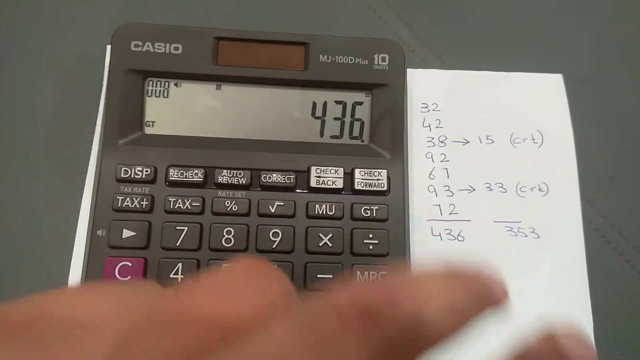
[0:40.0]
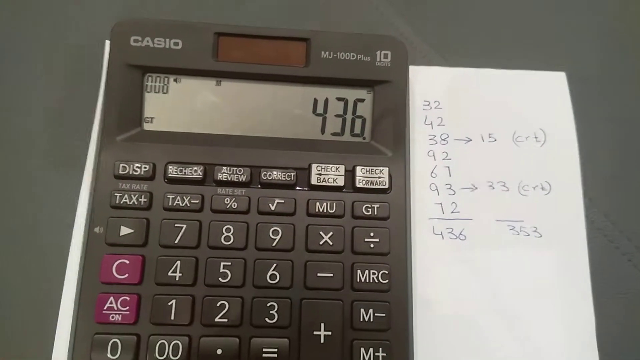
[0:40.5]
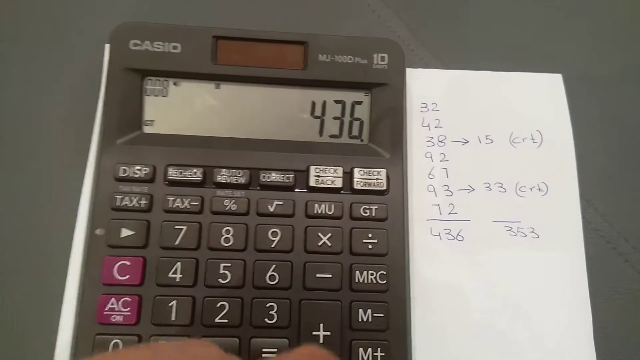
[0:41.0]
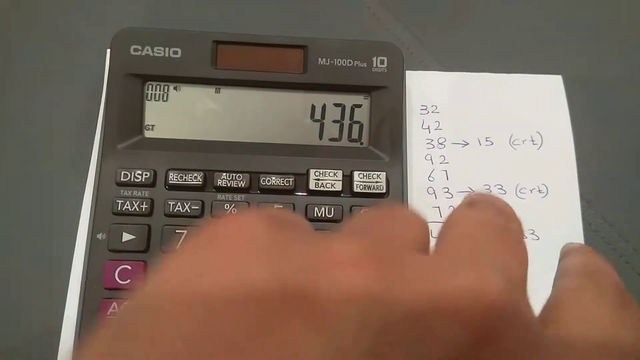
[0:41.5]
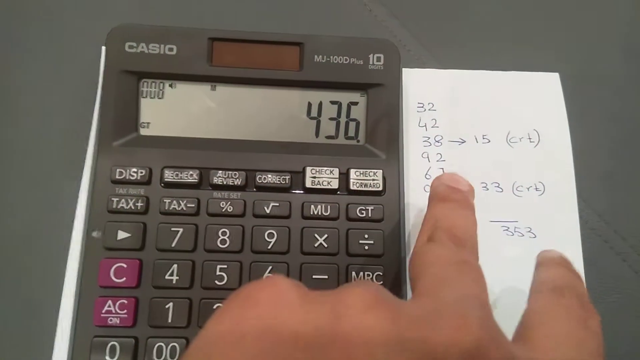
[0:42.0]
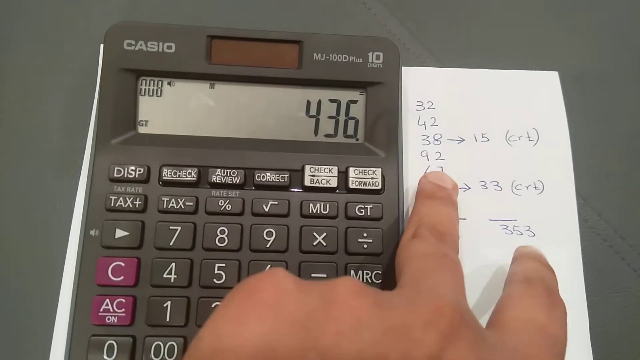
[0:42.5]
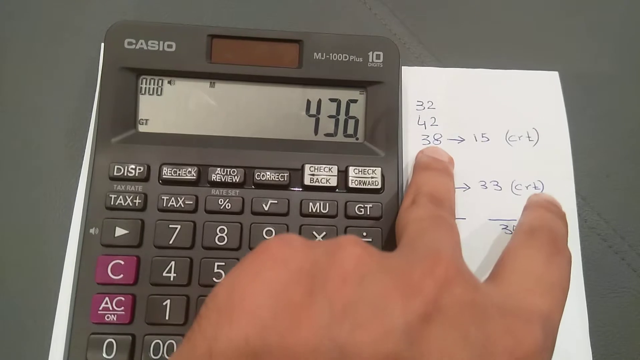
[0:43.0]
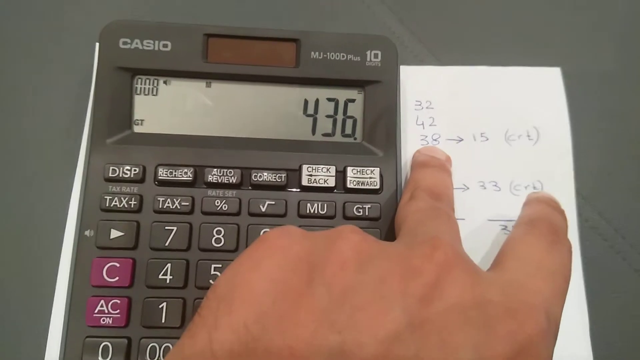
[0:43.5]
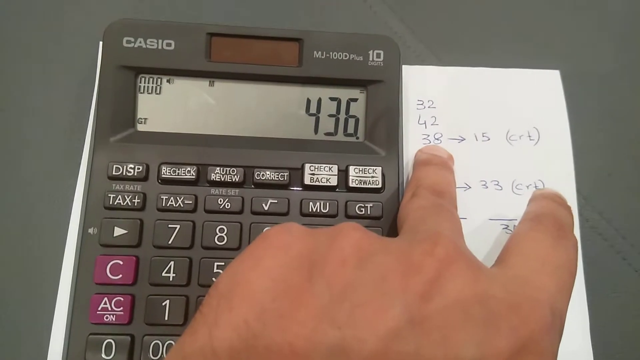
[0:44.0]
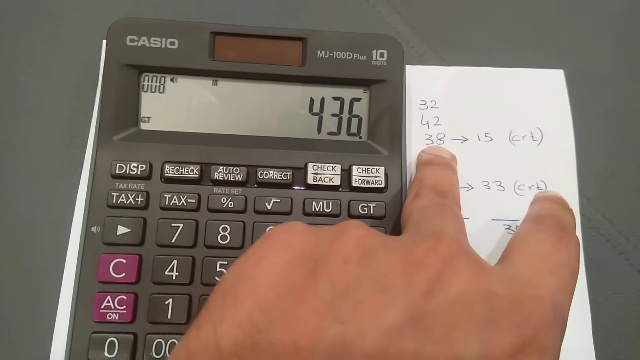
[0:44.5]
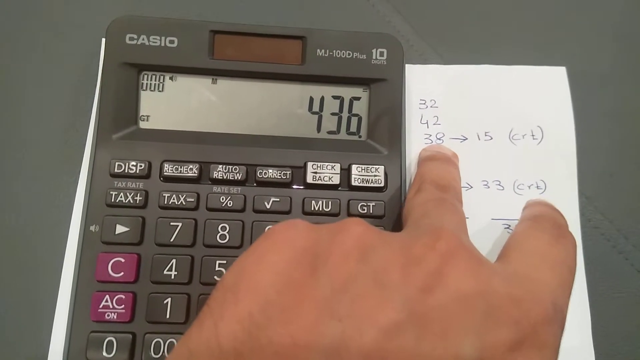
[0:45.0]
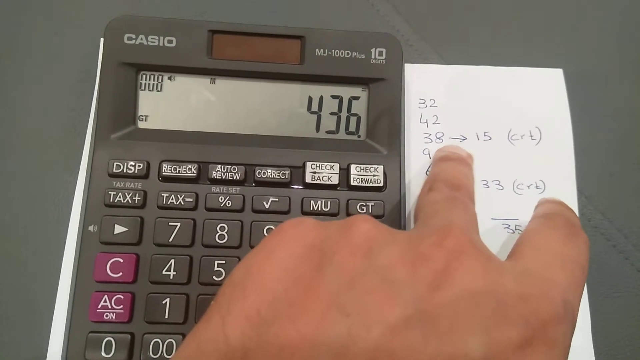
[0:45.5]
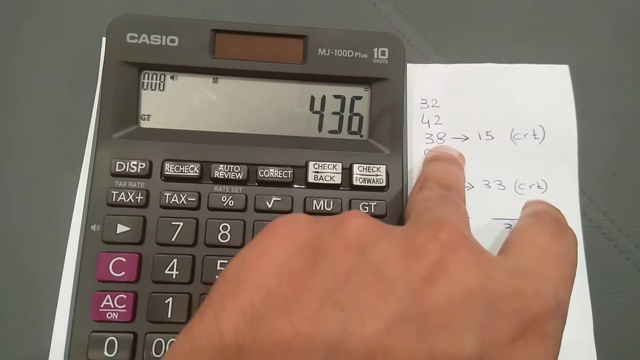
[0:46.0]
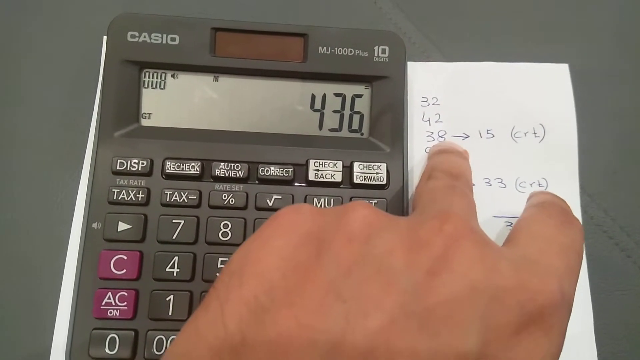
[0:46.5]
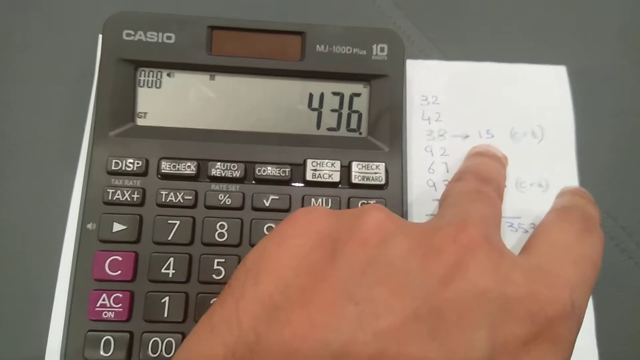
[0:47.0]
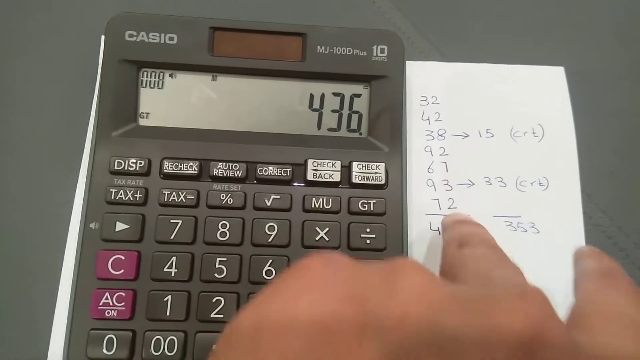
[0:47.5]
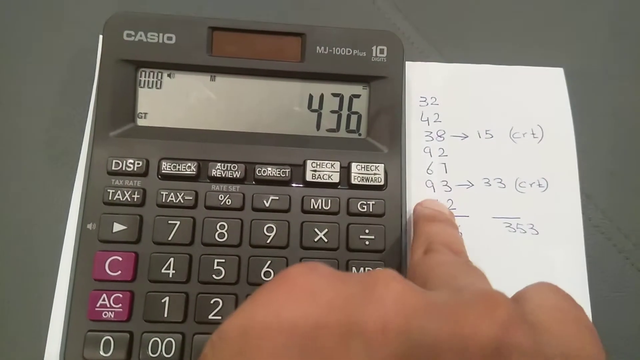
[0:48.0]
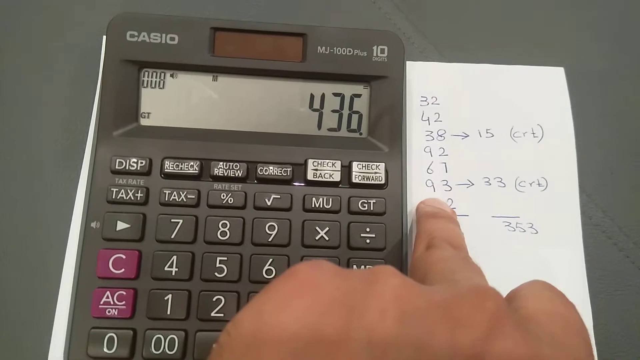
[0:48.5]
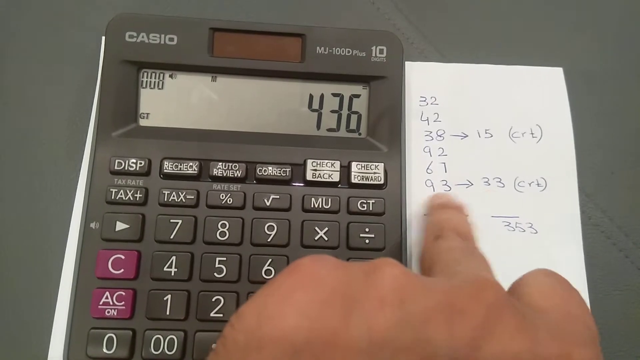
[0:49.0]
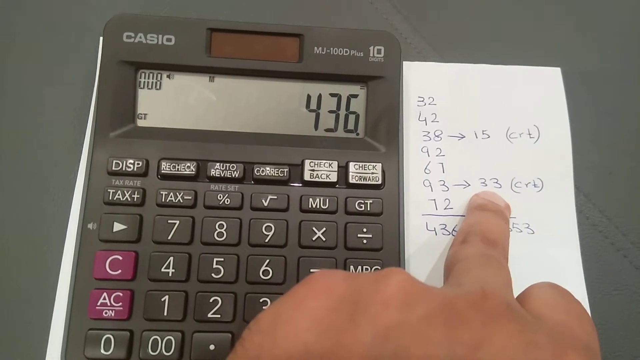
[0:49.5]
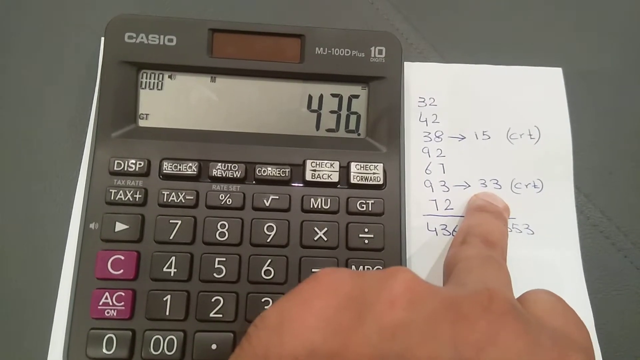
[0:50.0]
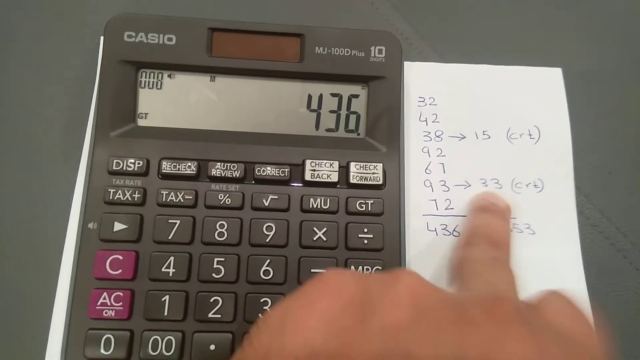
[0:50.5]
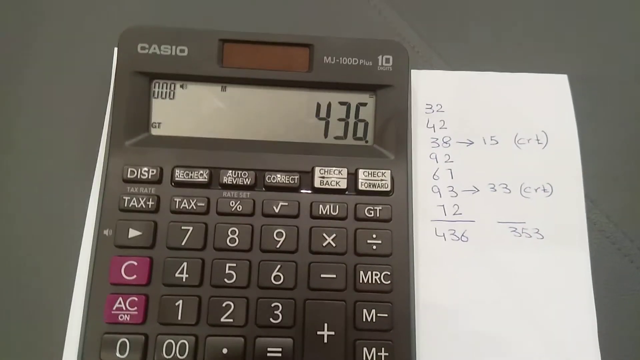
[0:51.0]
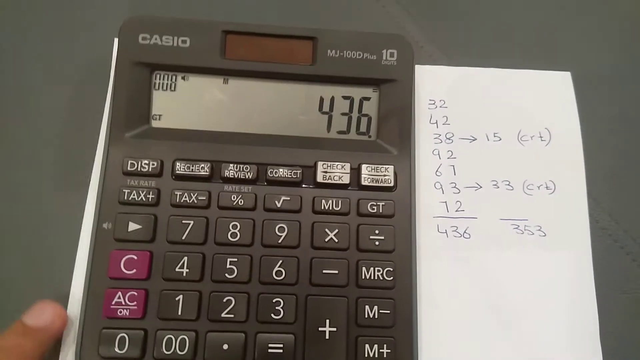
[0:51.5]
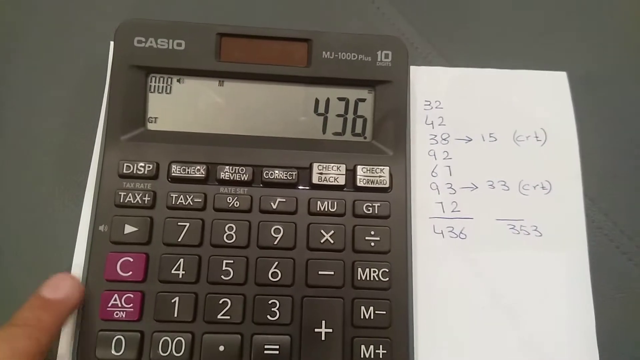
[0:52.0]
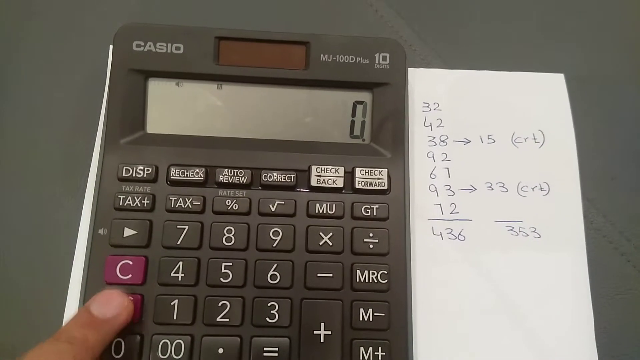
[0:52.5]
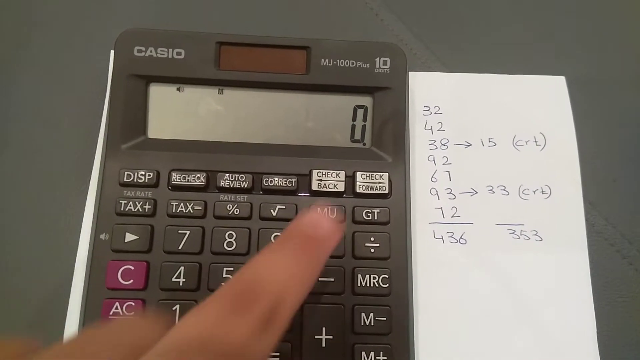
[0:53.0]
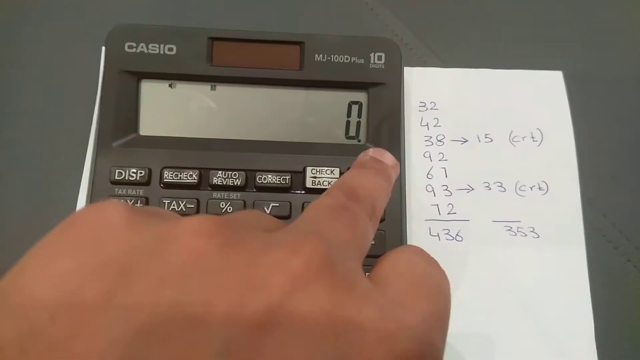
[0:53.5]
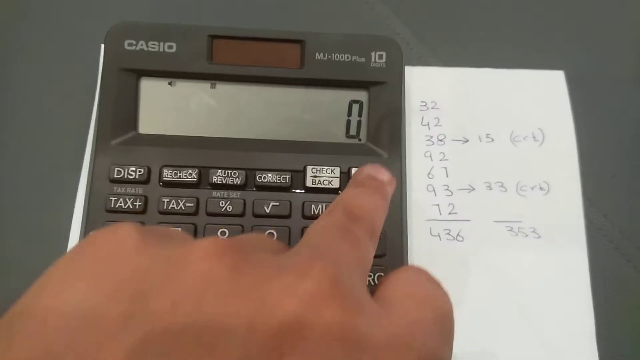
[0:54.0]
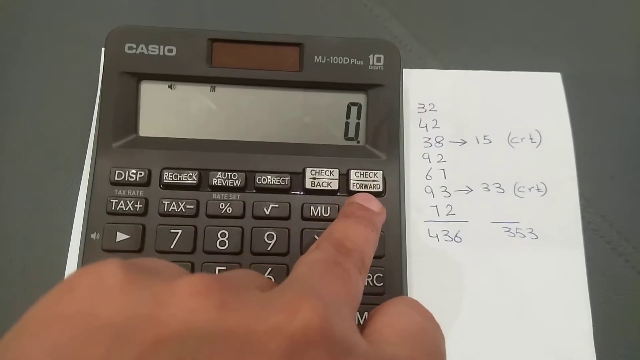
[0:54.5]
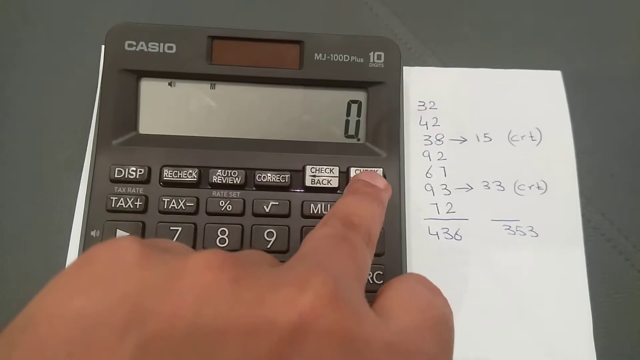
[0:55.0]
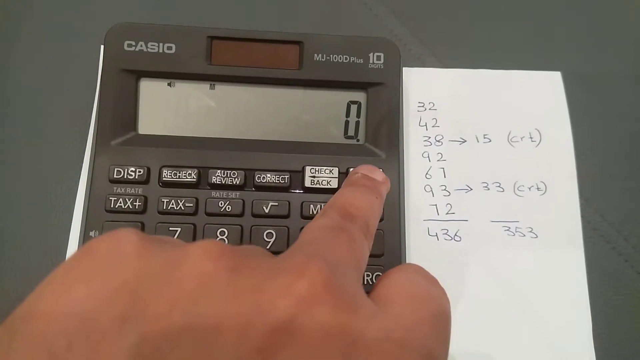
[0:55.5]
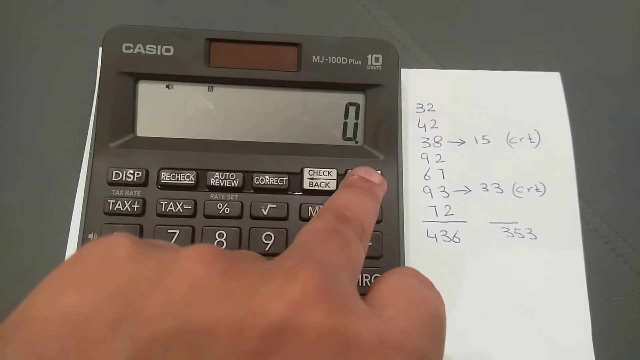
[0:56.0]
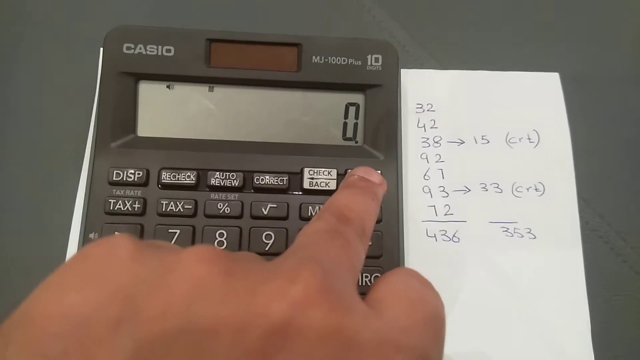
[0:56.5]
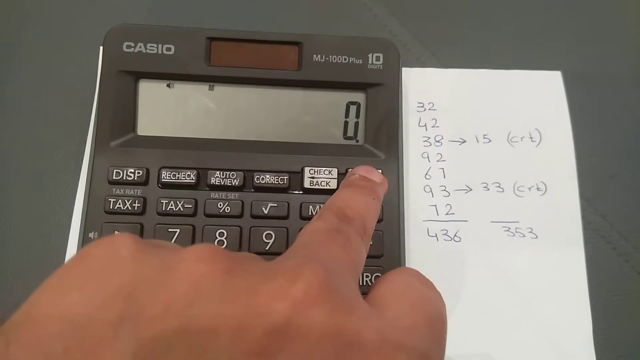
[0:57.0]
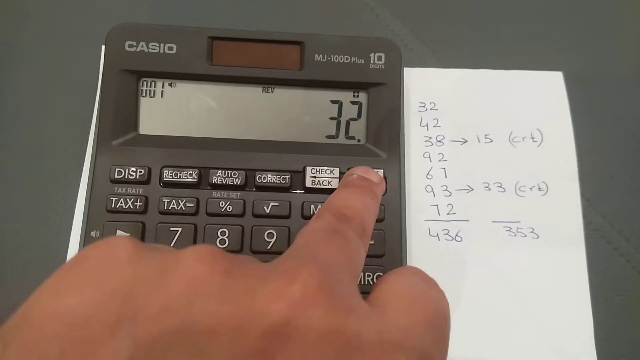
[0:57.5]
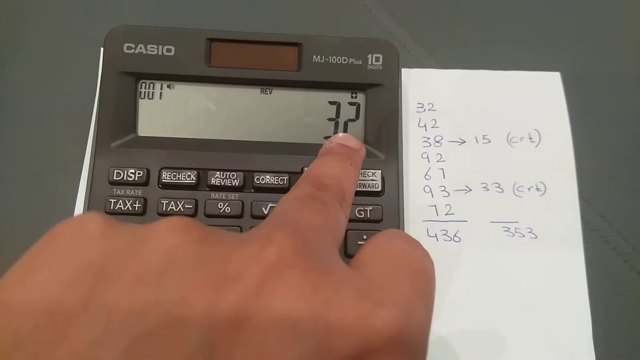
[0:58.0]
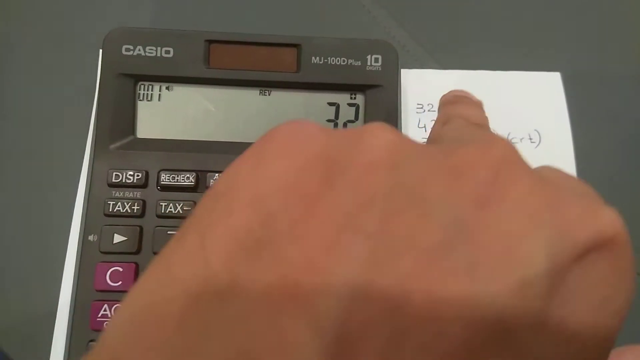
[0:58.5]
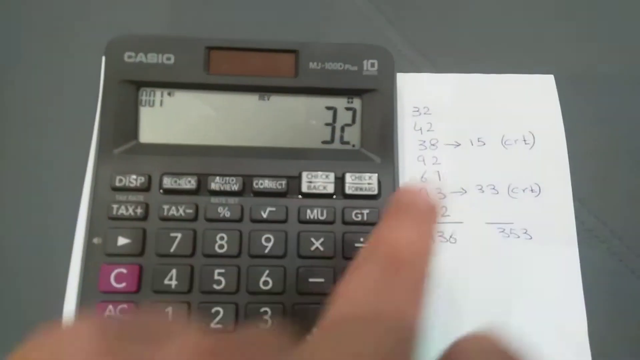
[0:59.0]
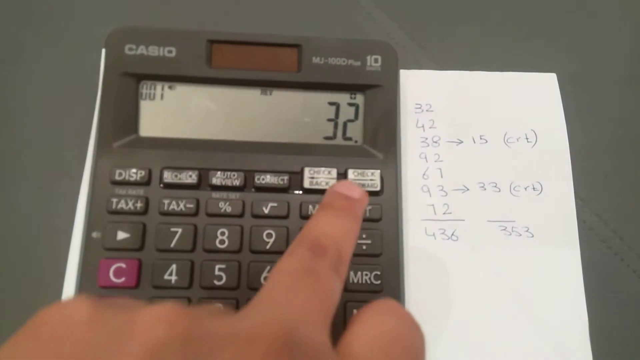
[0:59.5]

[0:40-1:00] The person points to the sheet of paper on the right side of the calculator, using their middle finger to point to the numbers and push the keys on the calculator. The list of numbers is 32, 42, 38, 92, 67, 93, and 72, followed by a line with the number 436 as the total. They point to the number 38, which has an arrow beside it followed by the number 15 and "CRT" in parentheses. Then they point to the number 93, which also has an arrow pointing to the right and the number 33 with "CRT" to its right. They clear the calculator, which has 436 displayed, and the display goes back to zero. They touch the check forward button and the number 32 shows up.